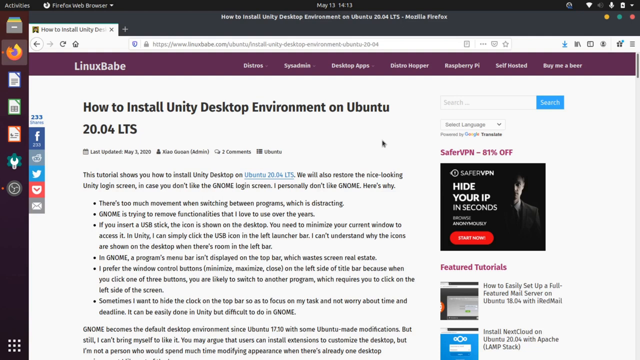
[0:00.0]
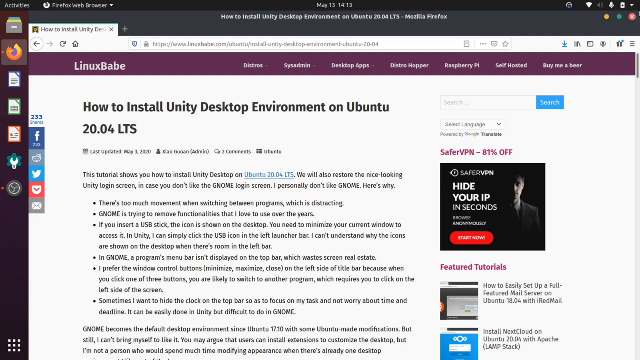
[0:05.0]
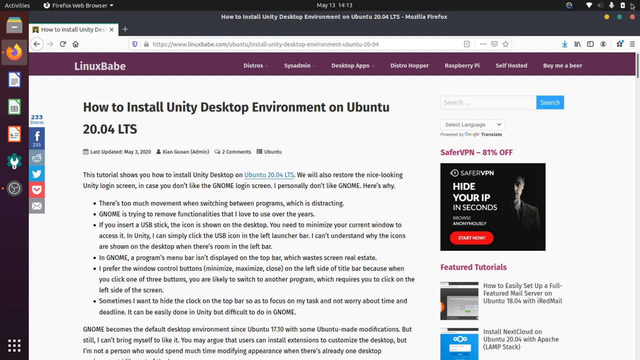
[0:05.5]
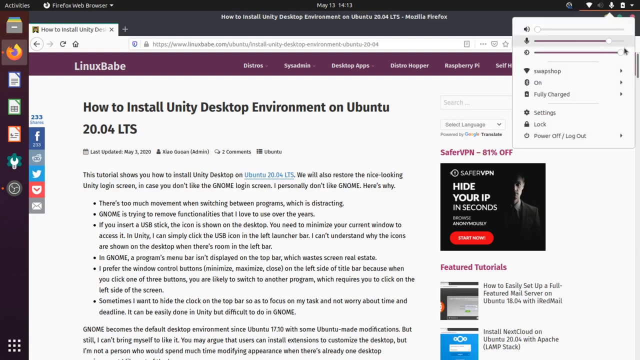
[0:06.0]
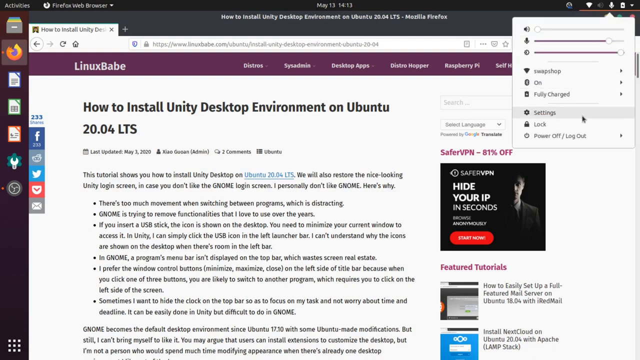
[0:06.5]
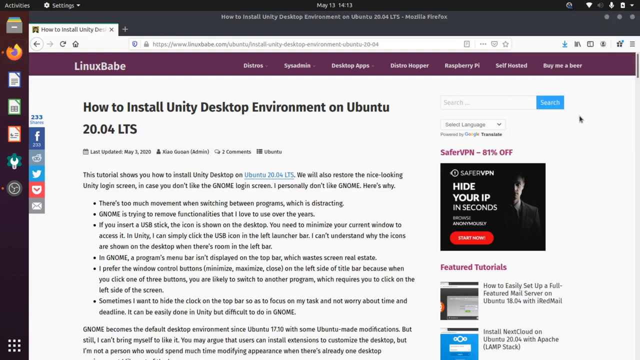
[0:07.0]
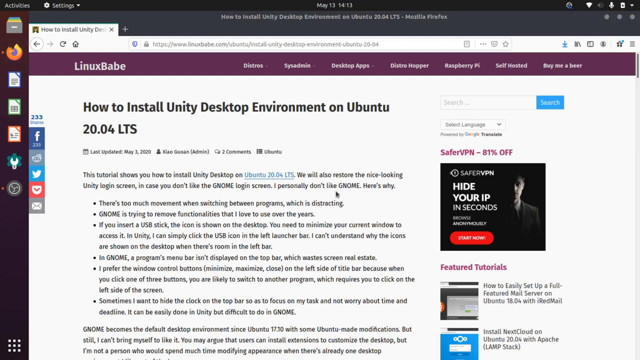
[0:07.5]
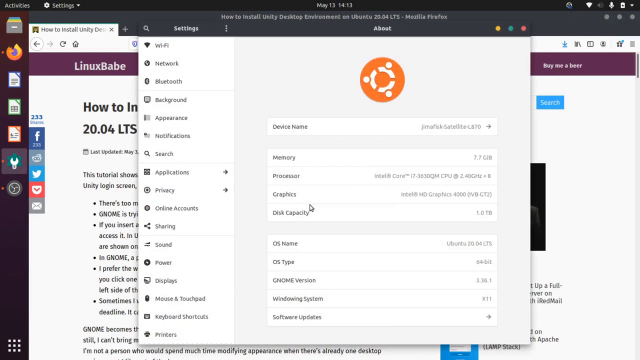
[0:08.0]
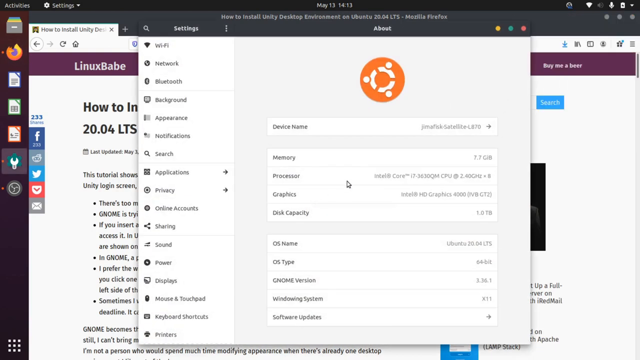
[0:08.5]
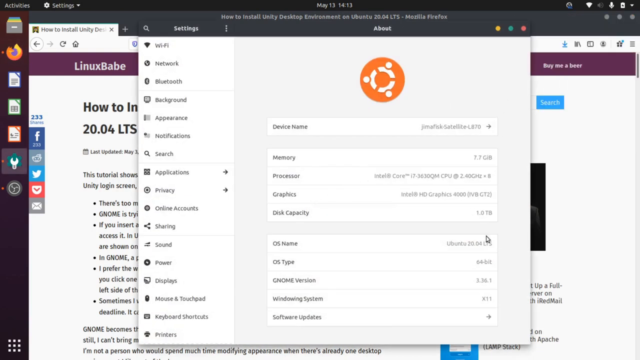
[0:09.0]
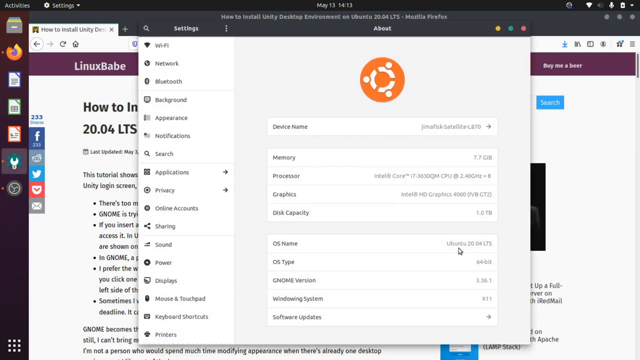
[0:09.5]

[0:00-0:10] A web page on a Windows PC belongs to LinuxBabe and shows an article titled "How to Install Unity Desktop Environment on Ubuntu 20.04 LTS," with the article text following the title. A bar on the left of the page holds what appear to be shortcuts and tabs. Tabs along the page include "Desktop apps," "Raspberry PI," "Self Hosted," and, all the way to the right, "Buy Me a Beer." There are ads to the side, geared toward PCs. A black cursor moves to a drop-down arrow, which opens a box; the cursor moves down the list, appears to highlight settings, and clicks it. The Wi-Fi section of the PC's settings appears, and the cursor closes that box, returning to the LinuxBabe page with the article on how to install Unity Desktop Environment on Ubuntu 20.04 LTS.